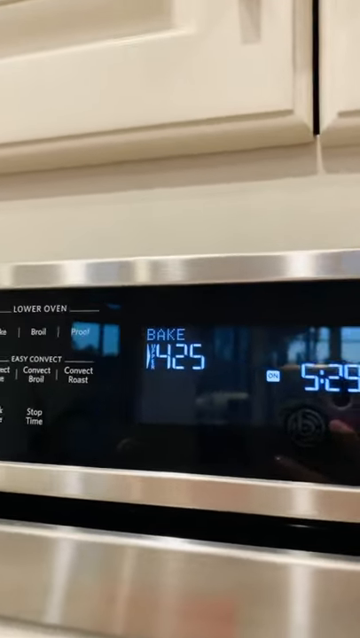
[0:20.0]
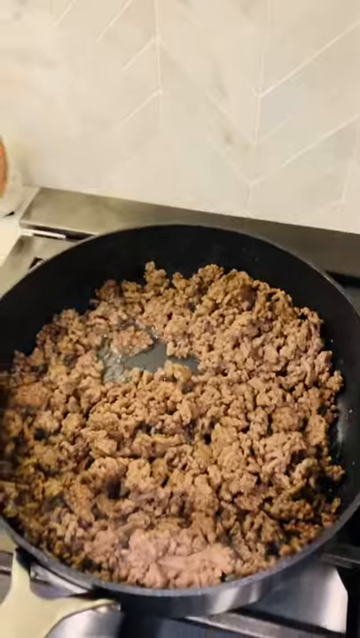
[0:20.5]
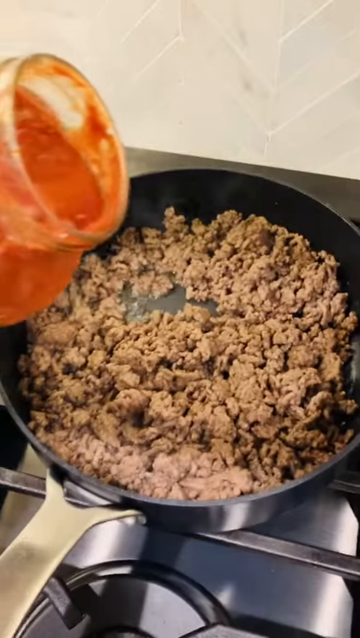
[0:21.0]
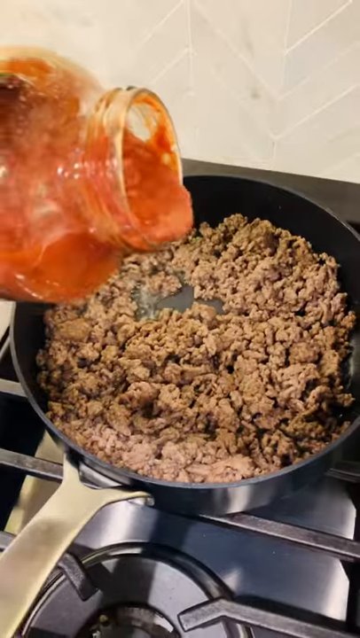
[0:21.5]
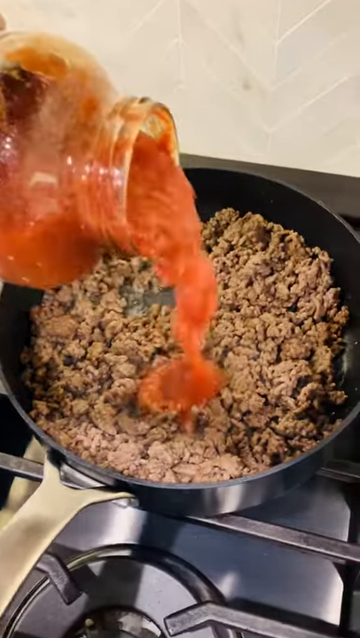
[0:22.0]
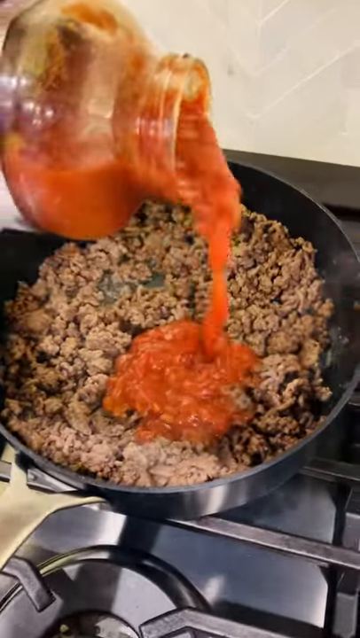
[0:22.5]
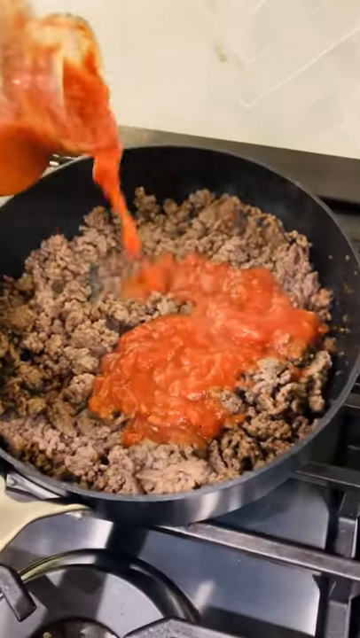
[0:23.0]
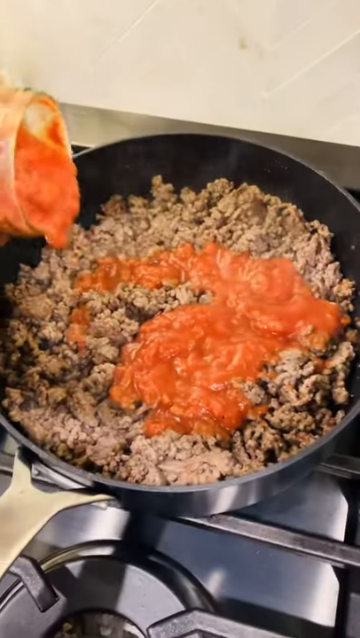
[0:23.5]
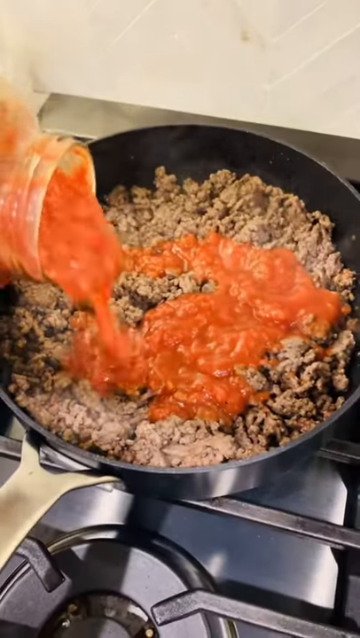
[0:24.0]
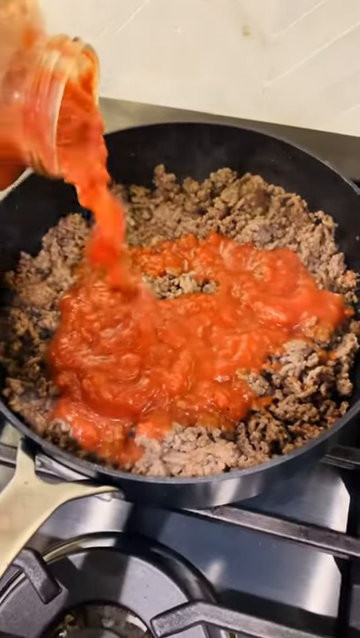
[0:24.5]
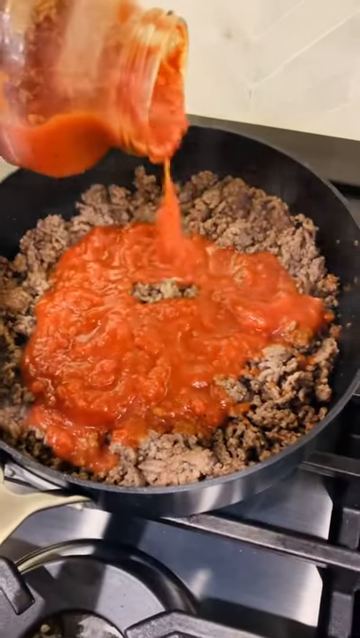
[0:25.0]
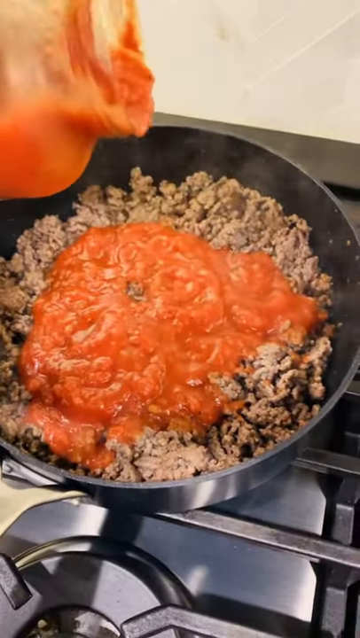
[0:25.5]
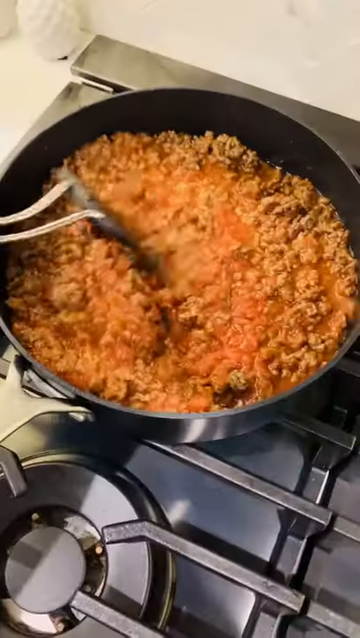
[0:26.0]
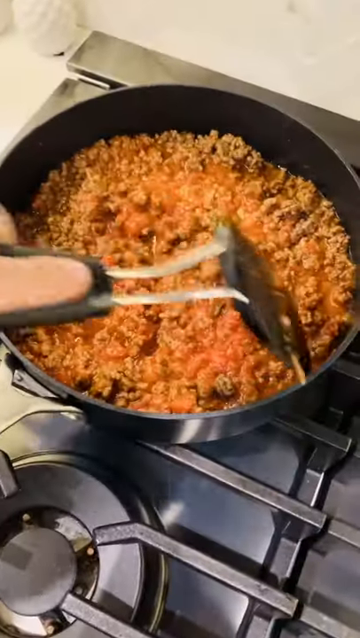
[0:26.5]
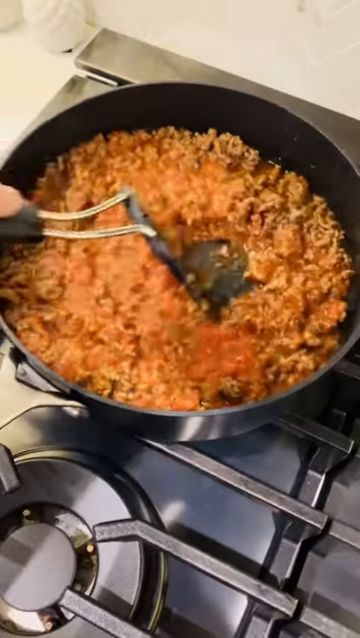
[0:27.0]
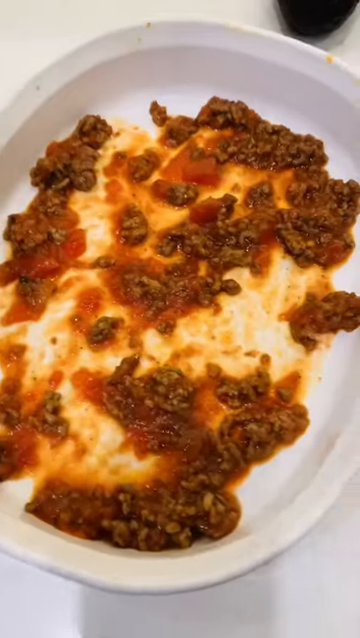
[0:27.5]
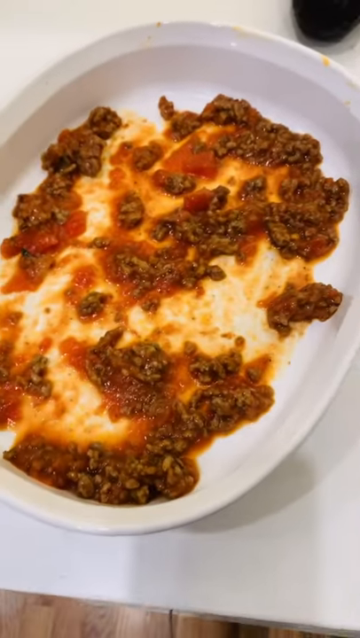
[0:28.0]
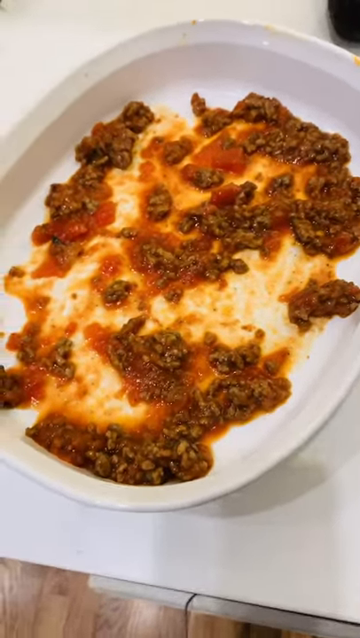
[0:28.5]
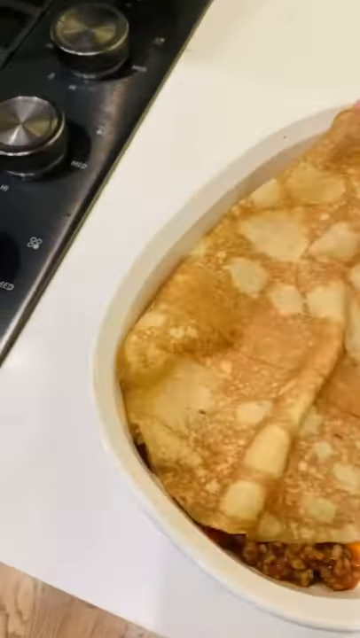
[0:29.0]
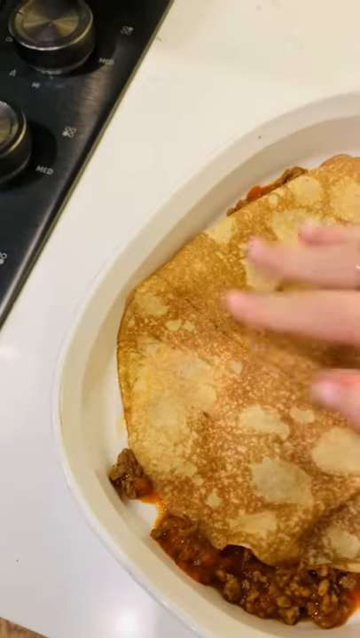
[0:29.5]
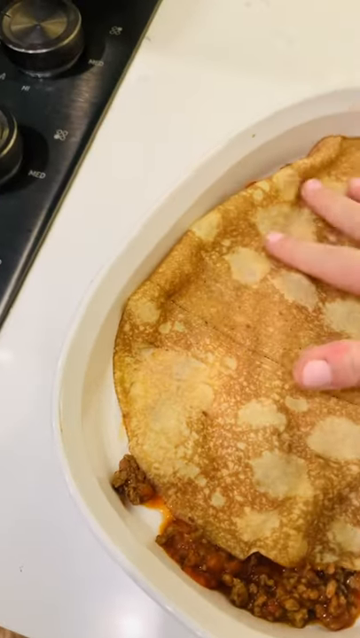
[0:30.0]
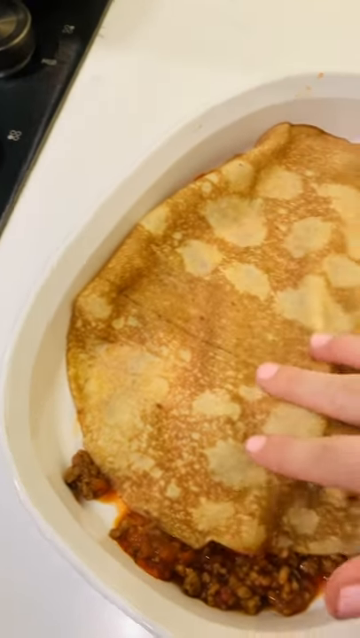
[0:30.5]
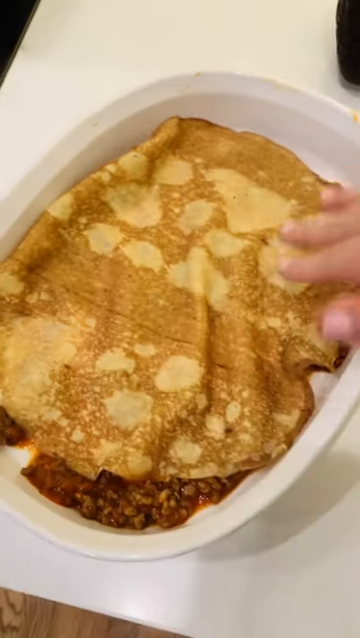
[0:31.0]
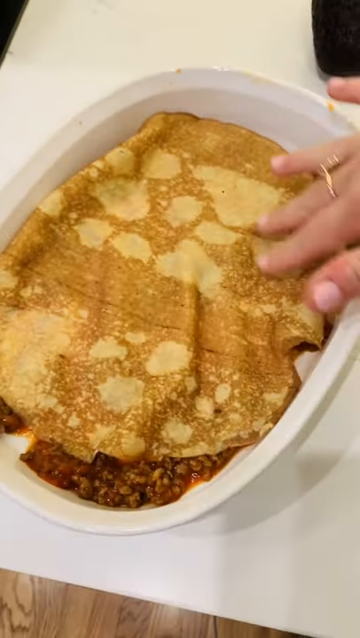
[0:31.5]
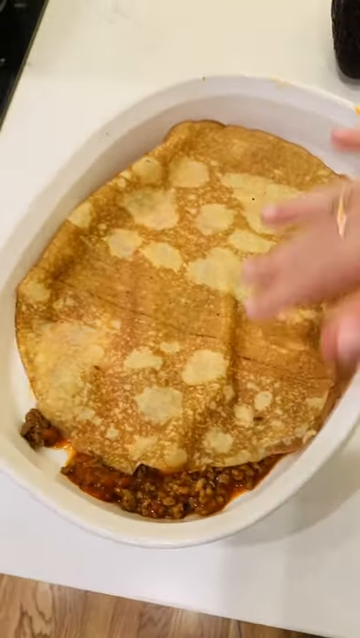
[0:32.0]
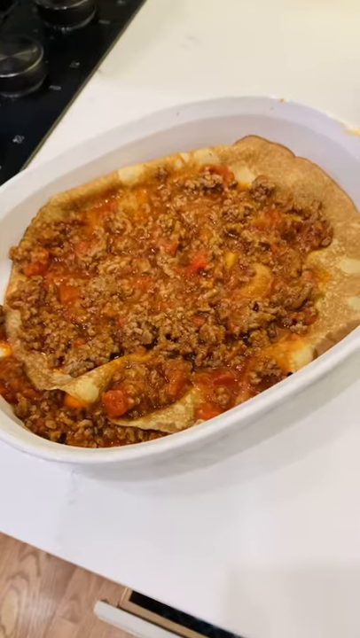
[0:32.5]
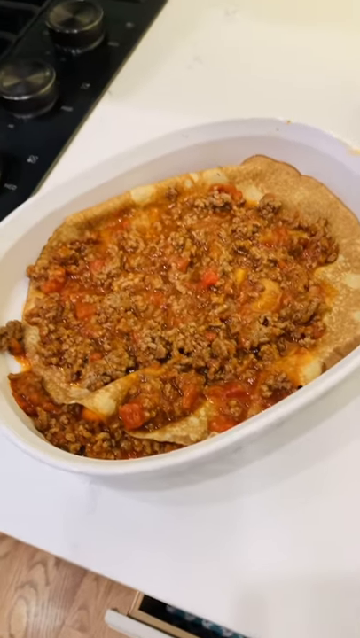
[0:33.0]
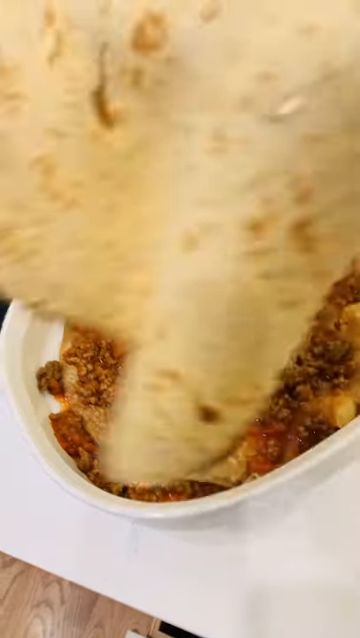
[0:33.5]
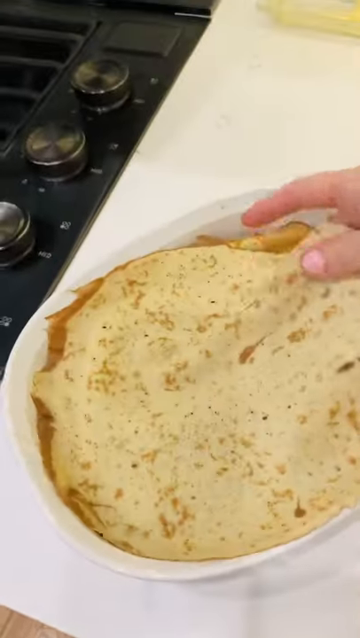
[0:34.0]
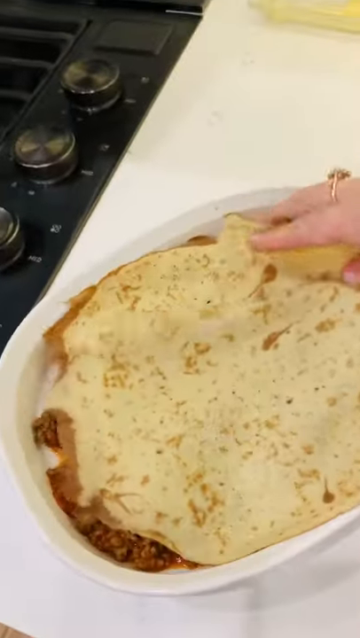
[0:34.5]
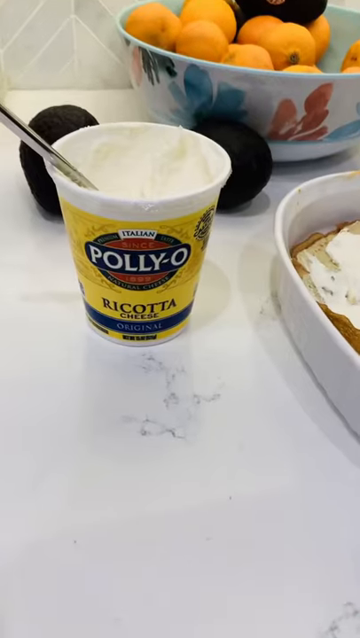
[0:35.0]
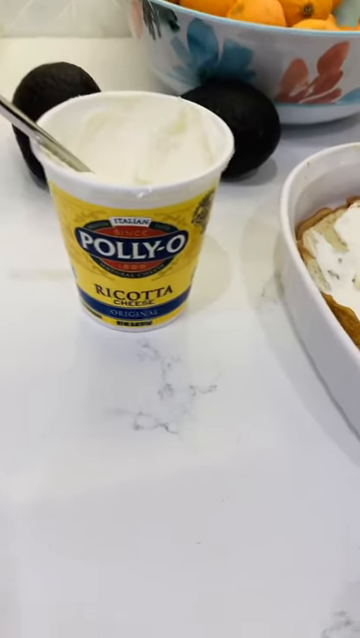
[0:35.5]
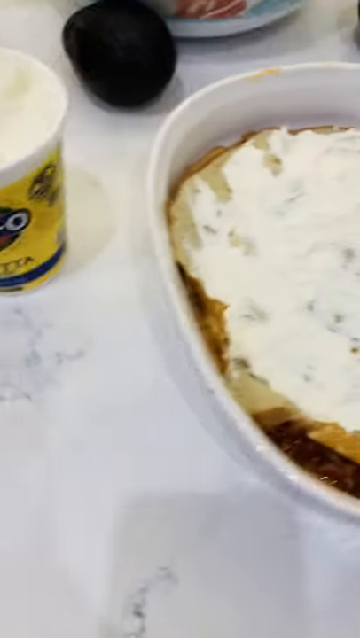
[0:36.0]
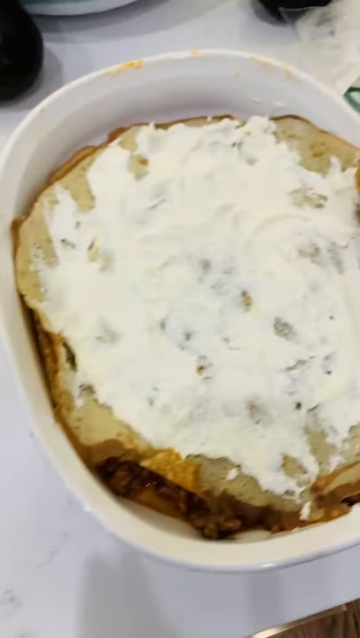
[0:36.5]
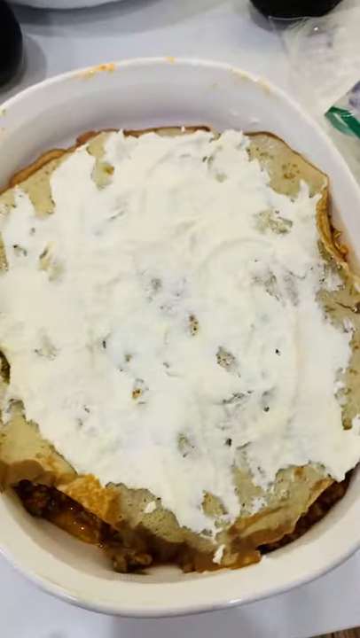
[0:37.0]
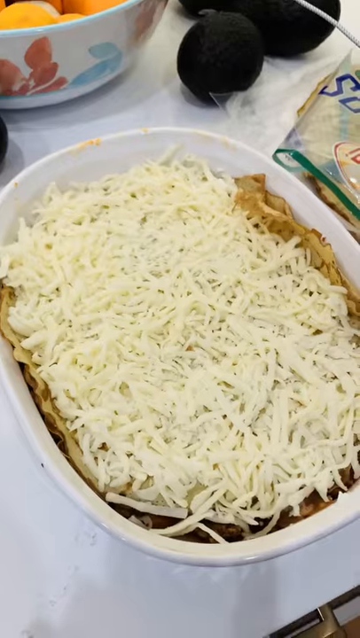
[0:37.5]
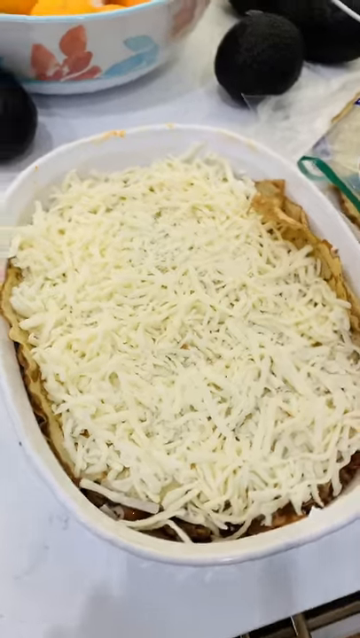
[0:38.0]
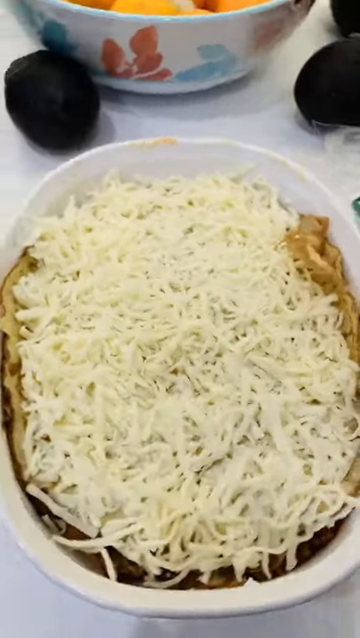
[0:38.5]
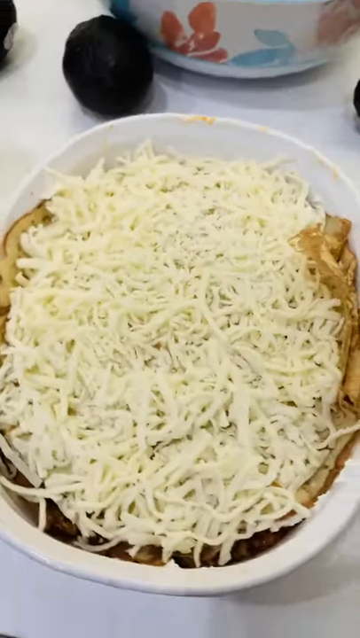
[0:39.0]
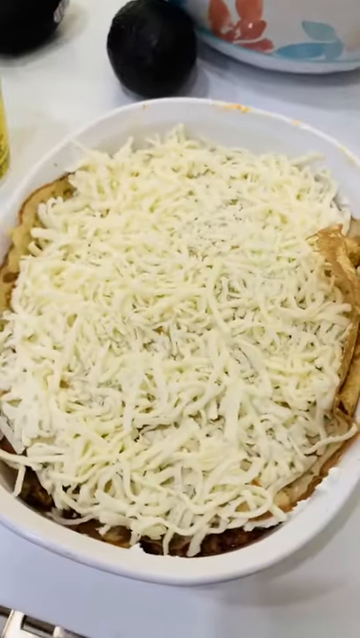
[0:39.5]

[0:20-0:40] Egg white with cauliflower is shown, apparently as a substitute for lasagna pasta. Right after, the tomato sauce being used is shown along with the nutrition facts for the tomato sauce. The video cuts to the tomato sauce being poured and then mixed in the pan with a spatula. The lasagna is then layered using the cauliflower egg wrap tortilla instead of pasta: first meat sauce is put down, then an egg wrap is placed over the meat sauce, and the layers repeat: meat sauce, egg wrap, meat sauce, egg wrap, meat sauce, egg wrap. Once the layering is complete, ricotta cheese is spread over the top layer of egg wrap.